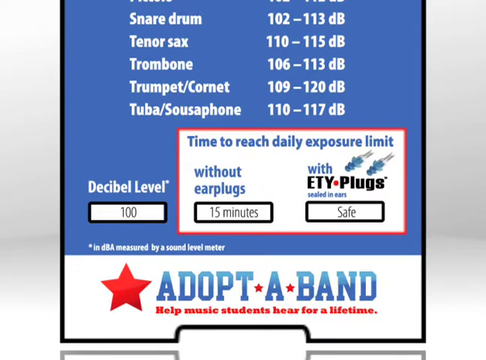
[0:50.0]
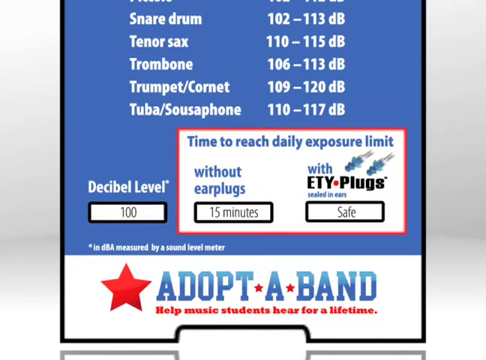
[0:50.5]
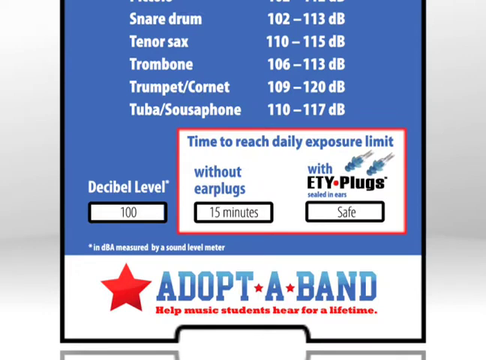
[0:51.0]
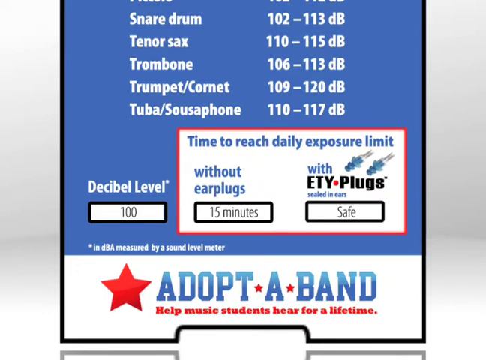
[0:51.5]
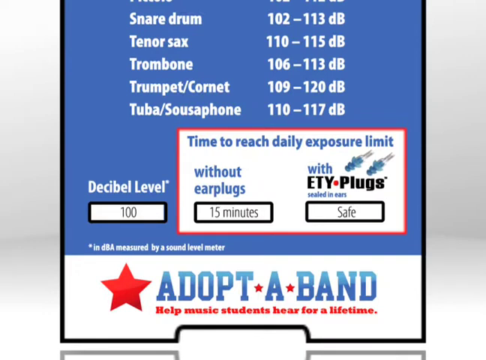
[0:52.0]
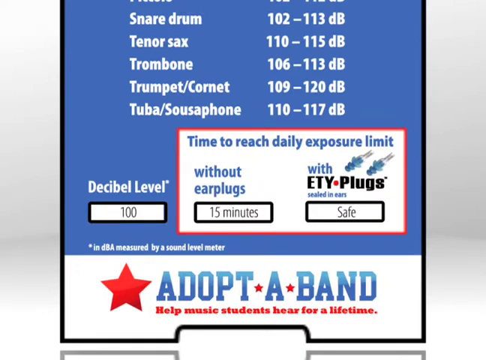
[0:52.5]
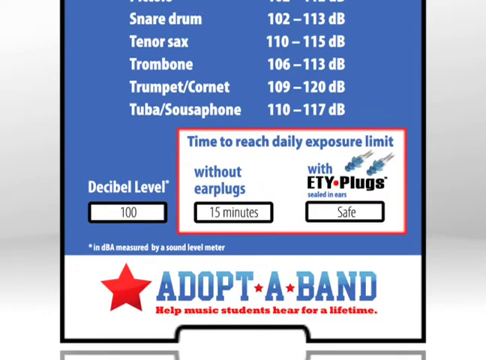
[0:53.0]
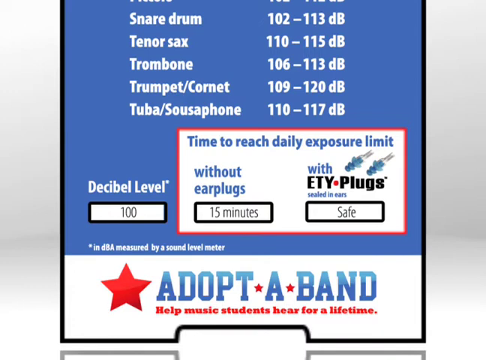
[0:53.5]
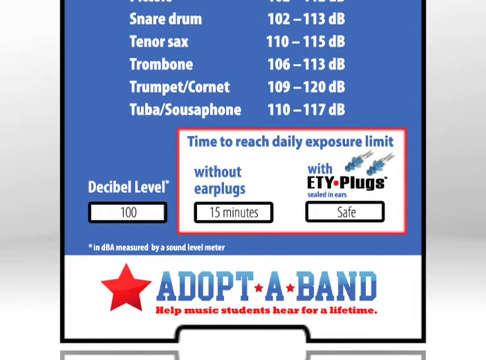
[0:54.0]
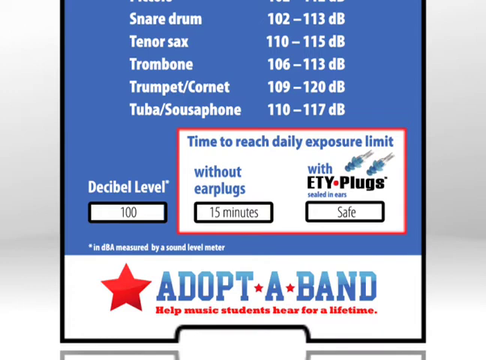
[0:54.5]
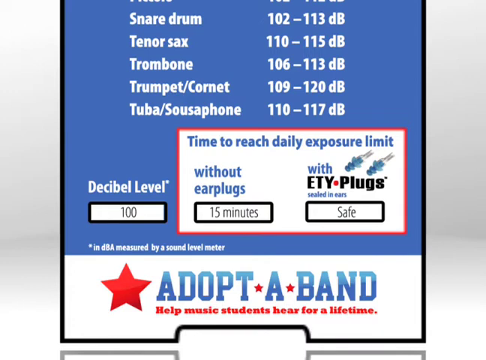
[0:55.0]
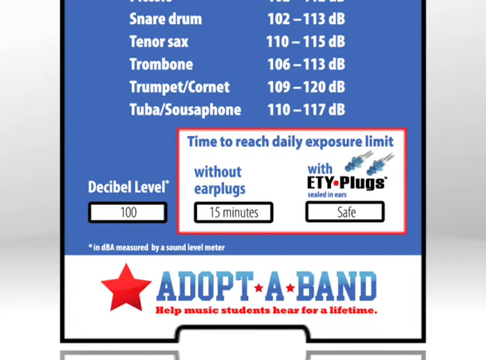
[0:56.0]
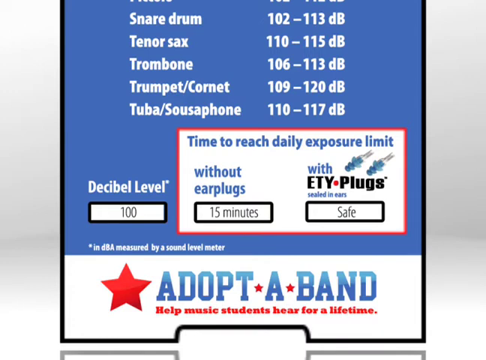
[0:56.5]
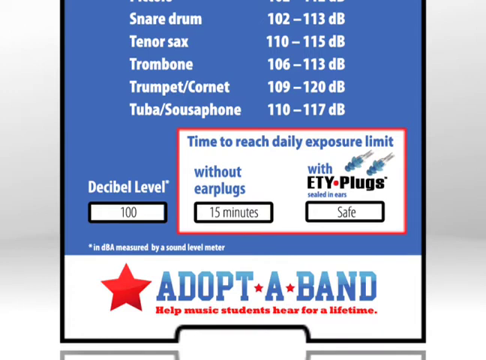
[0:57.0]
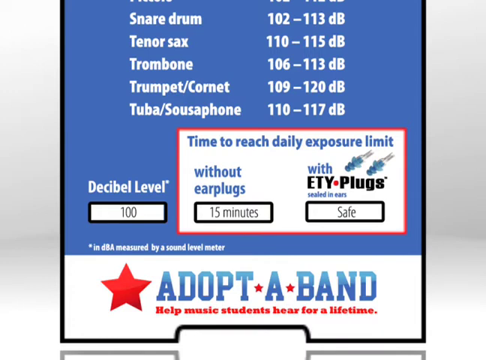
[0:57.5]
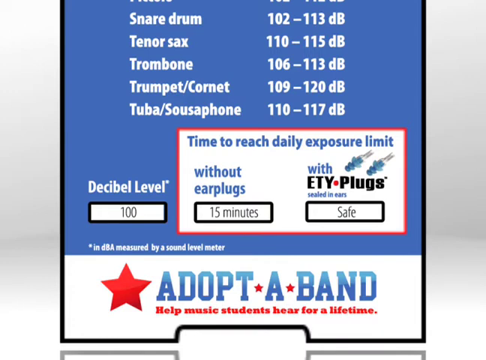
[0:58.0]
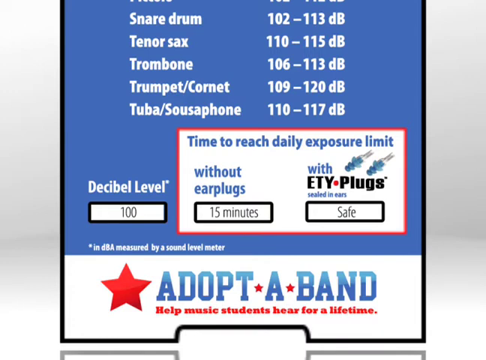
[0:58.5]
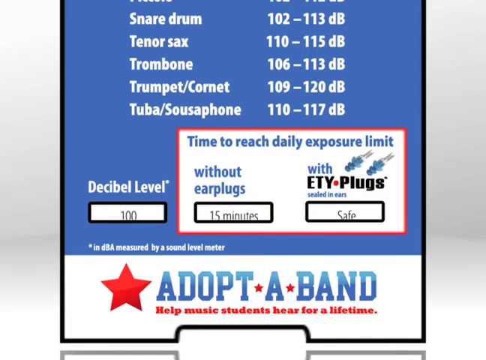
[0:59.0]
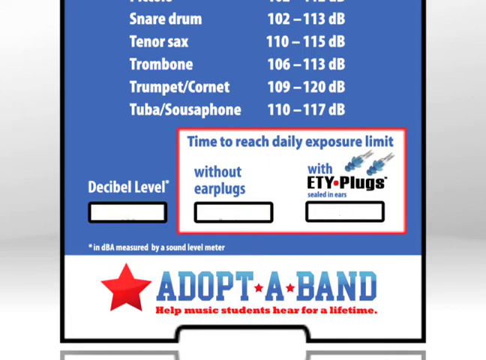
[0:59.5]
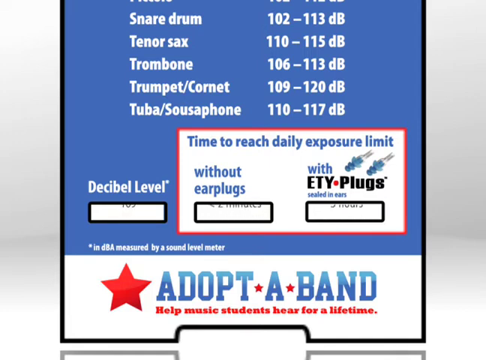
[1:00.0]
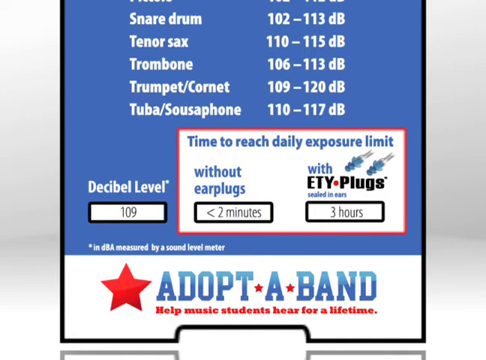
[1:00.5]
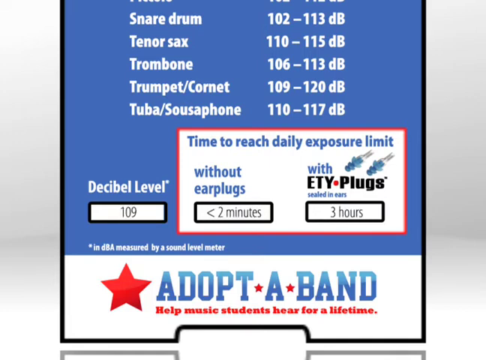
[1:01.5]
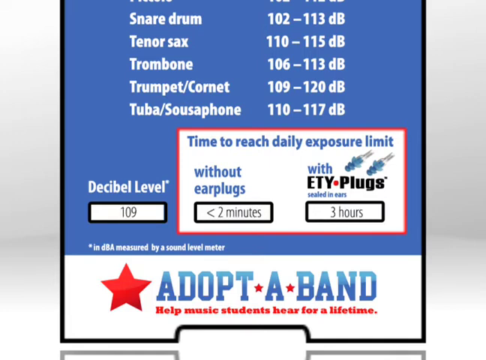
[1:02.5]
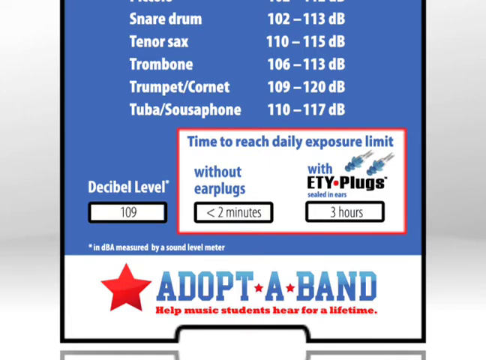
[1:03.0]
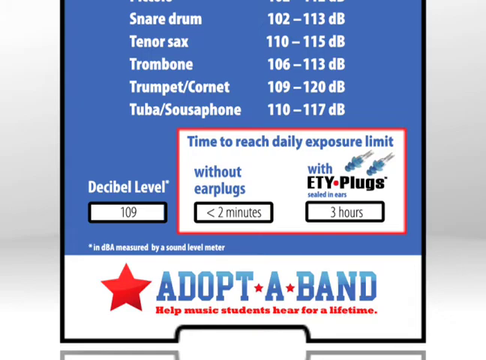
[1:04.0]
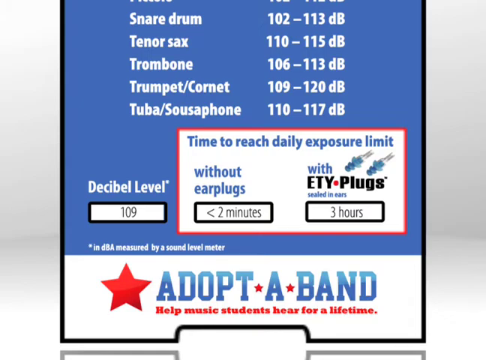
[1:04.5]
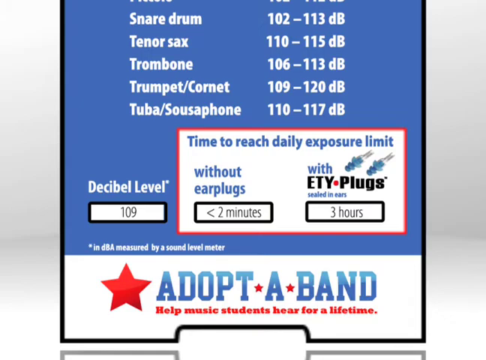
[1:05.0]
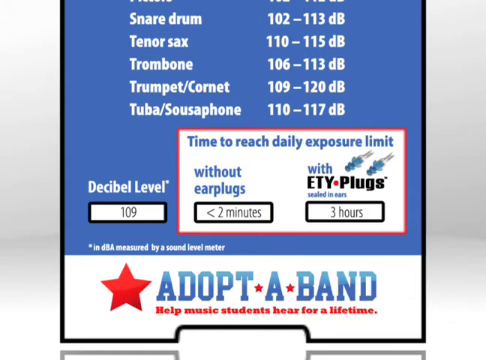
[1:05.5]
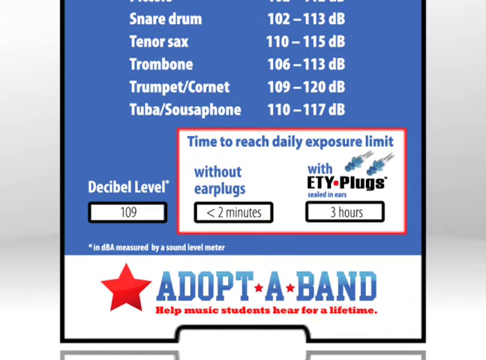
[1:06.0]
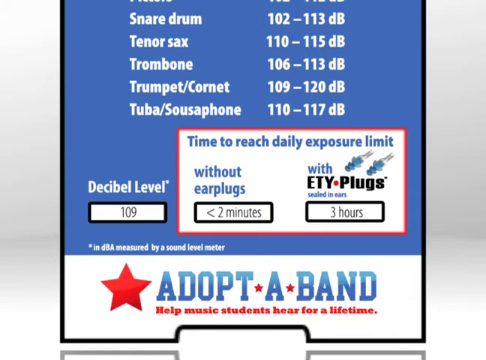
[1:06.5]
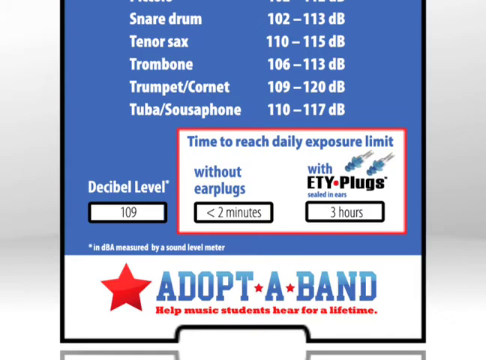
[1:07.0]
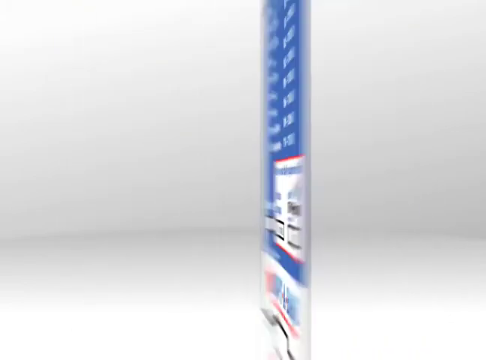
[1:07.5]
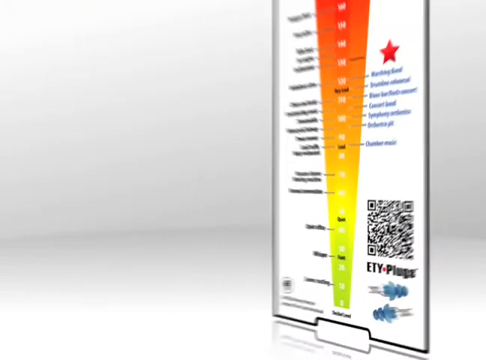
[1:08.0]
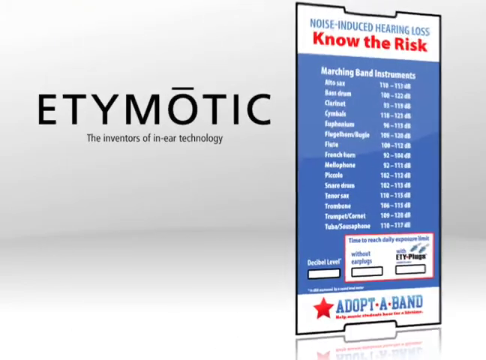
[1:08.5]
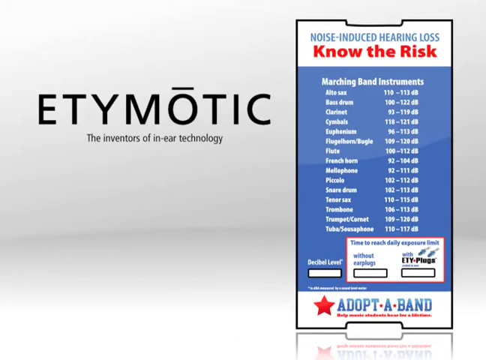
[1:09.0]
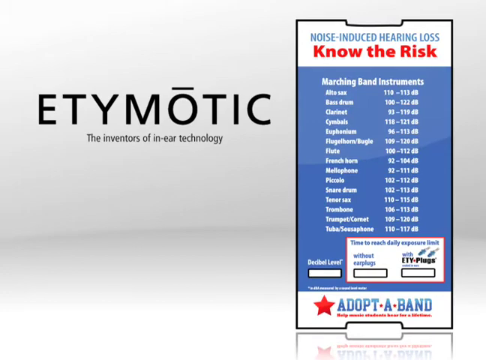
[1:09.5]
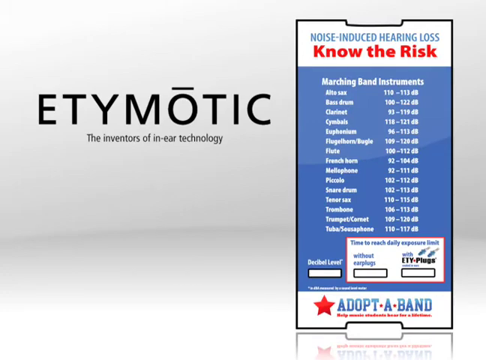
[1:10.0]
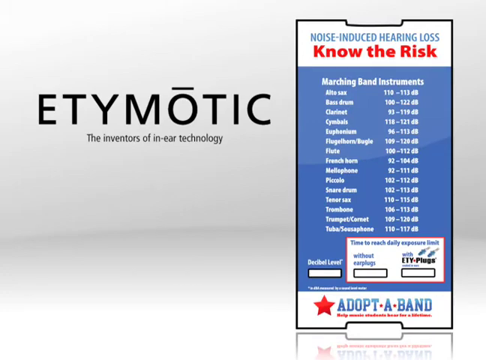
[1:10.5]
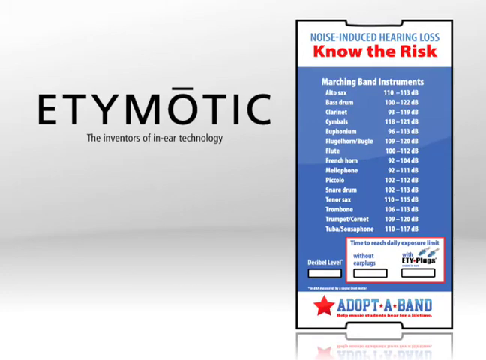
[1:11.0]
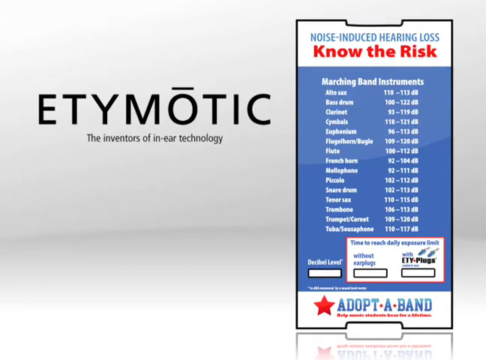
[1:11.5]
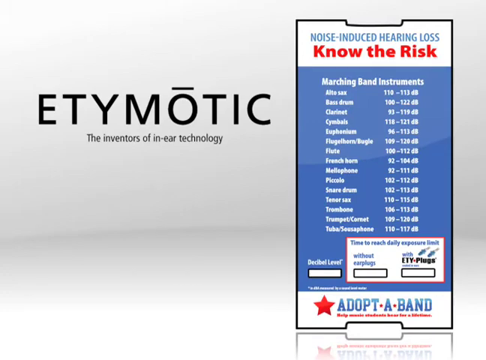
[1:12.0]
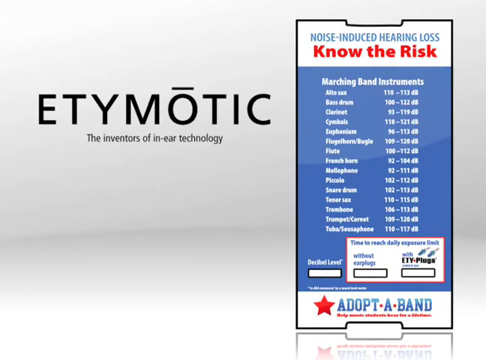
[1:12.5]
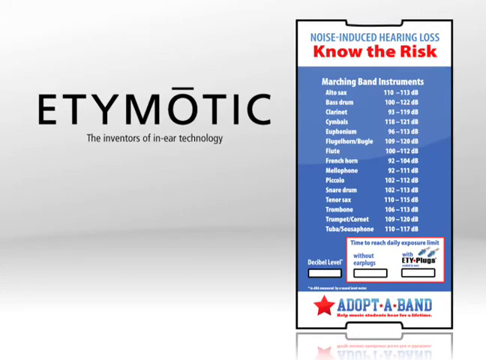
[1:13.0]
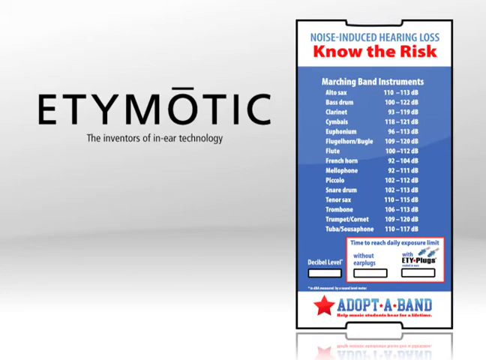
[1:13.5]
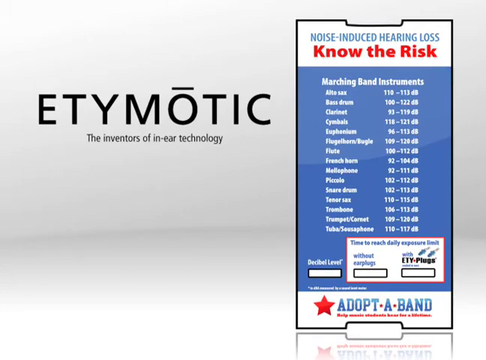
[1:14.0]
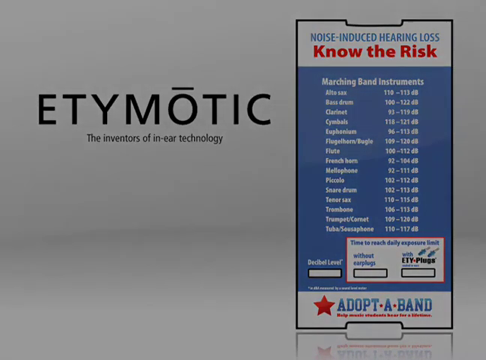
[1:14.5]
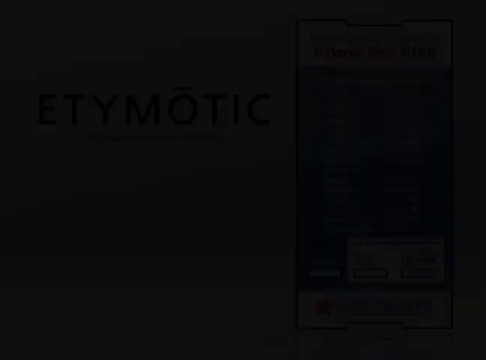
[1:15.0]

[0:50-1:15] The graph of the different musical instruments and their sound levels remains on screen, along with how much damage they can do to the eardrums, with the decibel level at the very bottom. On a white background with a red square, it says "time to reach daily exposure limit without earplugs, 15 minutes," while "with ETY plugs sealed in ears" it says "safe," apparently for a level of 100 decibels. The image then shows a decibel level of 109, with a small animation showing it going up; at this level the daily exposure limit without earplugs is less than two minutes, and with earplugs it is three hours. Many of the instruments are above 109, and some of the loudest go up to 120. Finally, the manufacturer is shown: Etymotic, "the inventors of in-ear technology."